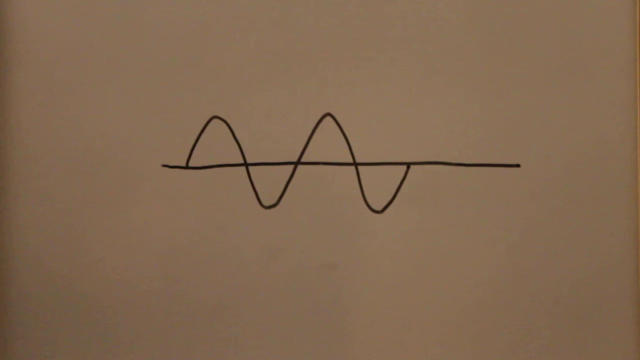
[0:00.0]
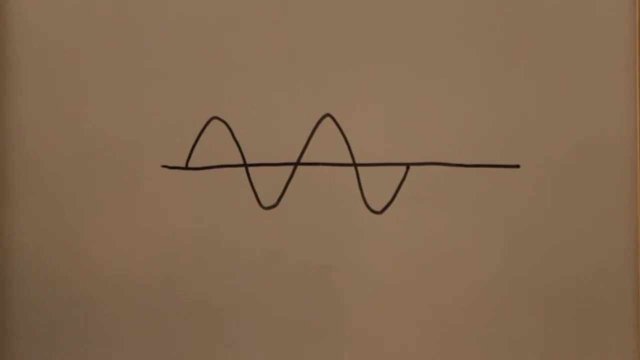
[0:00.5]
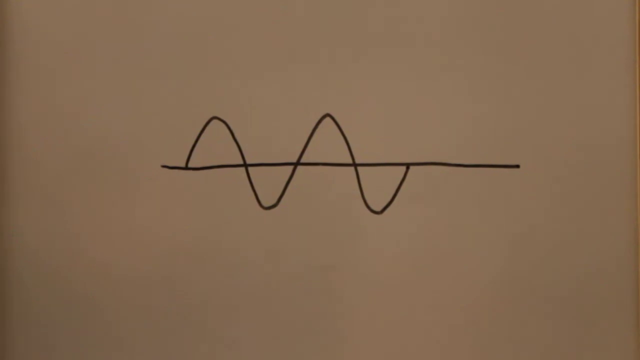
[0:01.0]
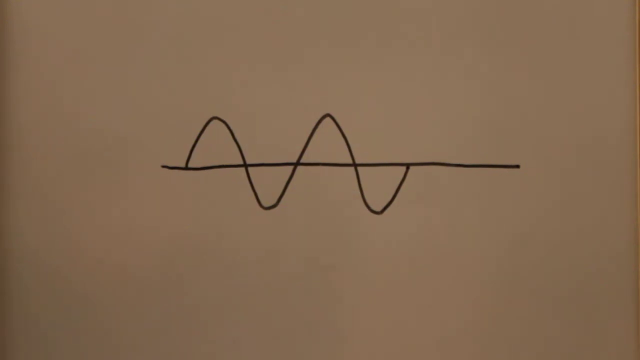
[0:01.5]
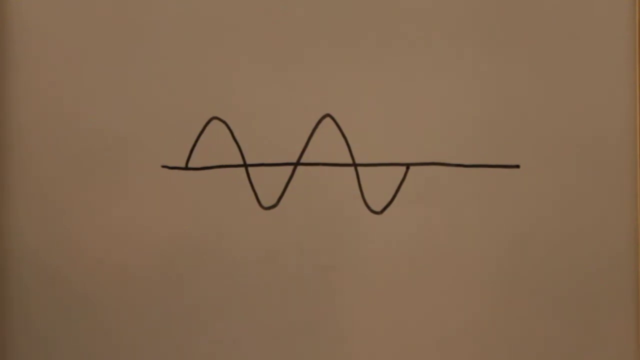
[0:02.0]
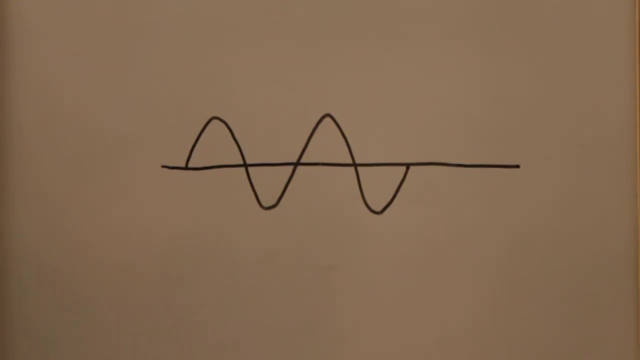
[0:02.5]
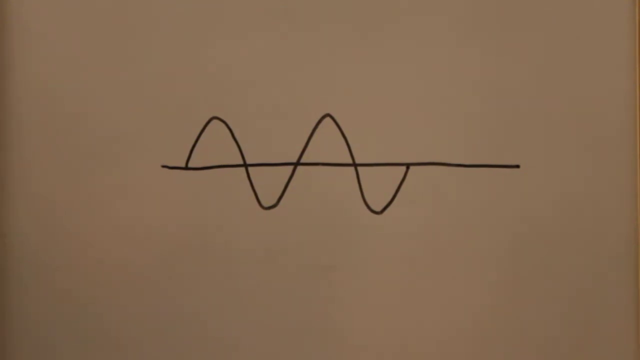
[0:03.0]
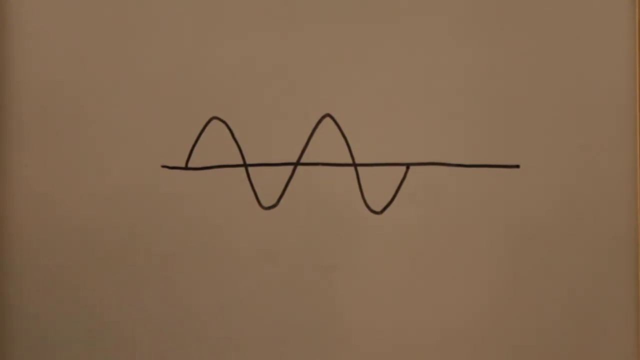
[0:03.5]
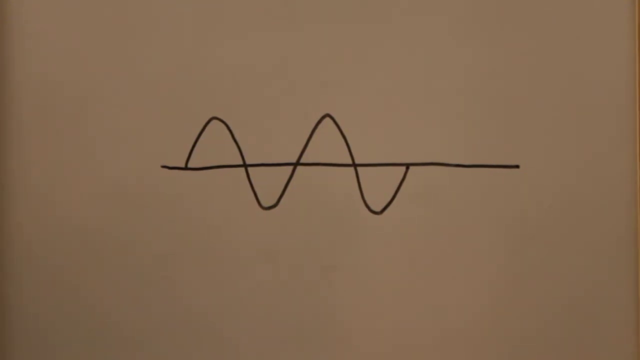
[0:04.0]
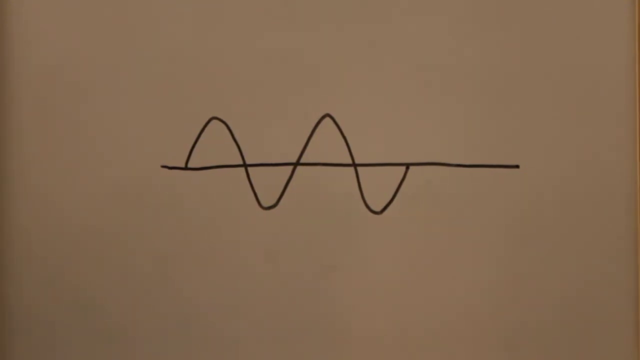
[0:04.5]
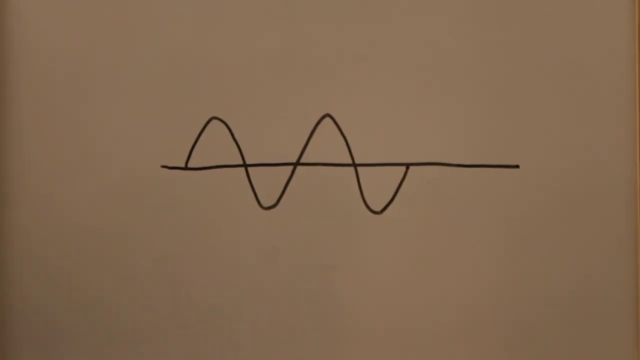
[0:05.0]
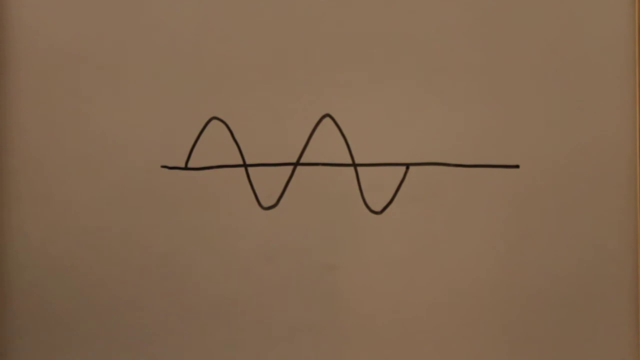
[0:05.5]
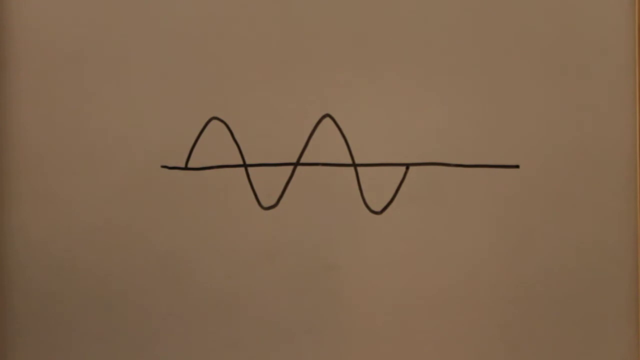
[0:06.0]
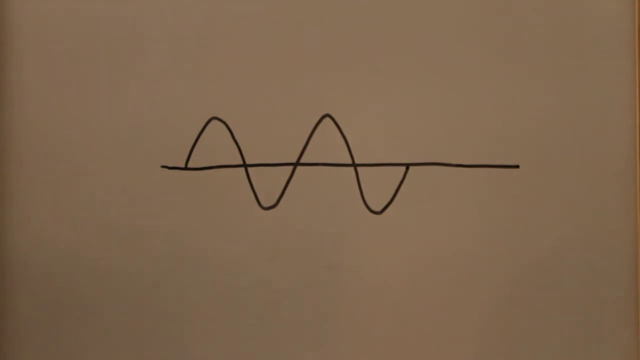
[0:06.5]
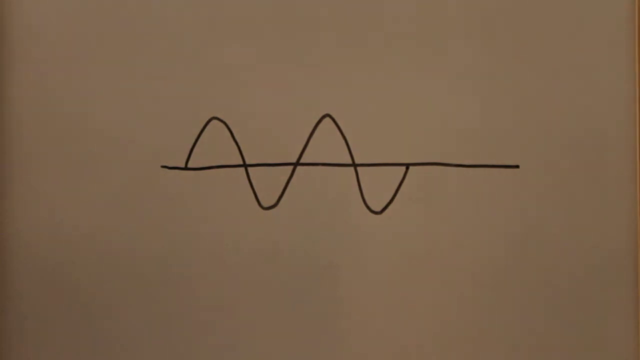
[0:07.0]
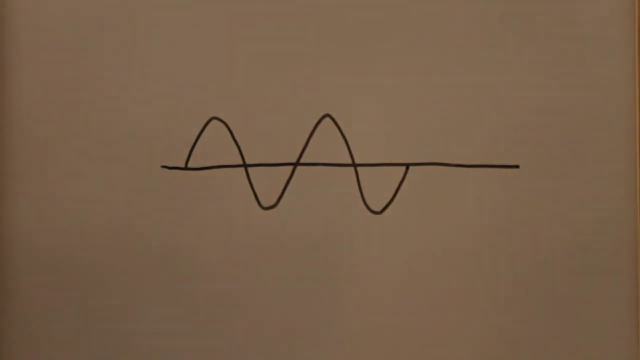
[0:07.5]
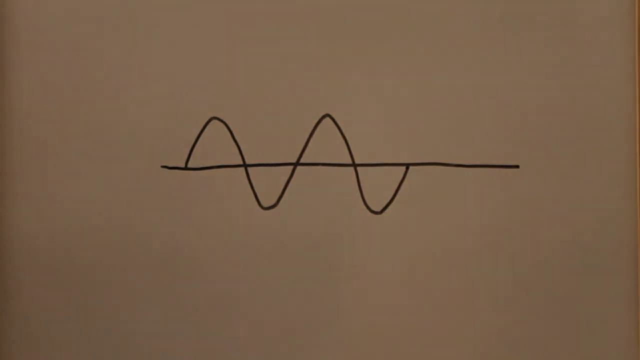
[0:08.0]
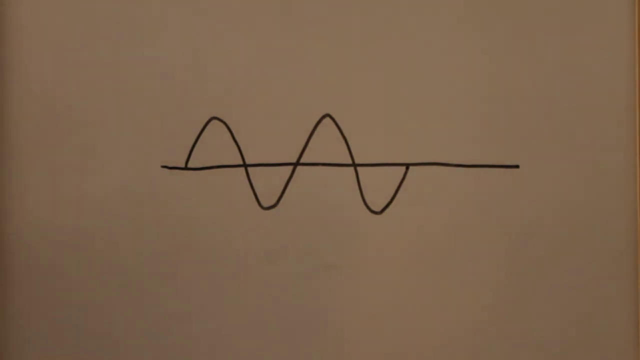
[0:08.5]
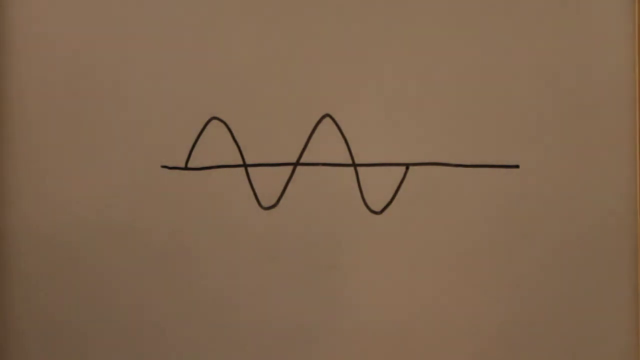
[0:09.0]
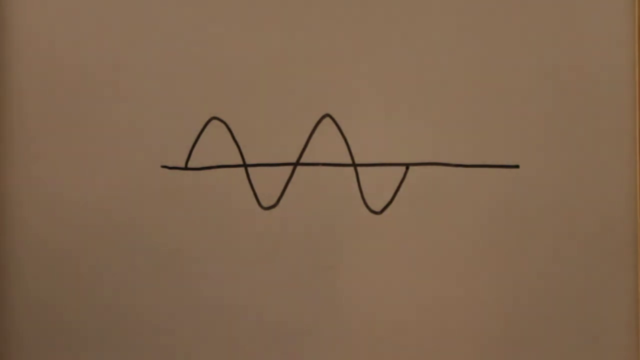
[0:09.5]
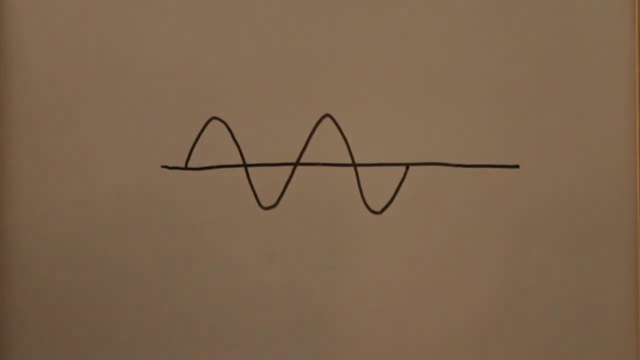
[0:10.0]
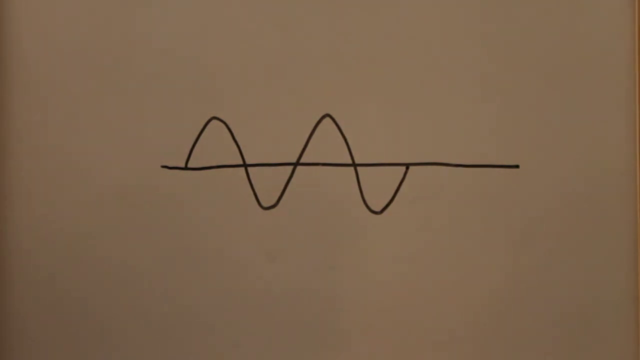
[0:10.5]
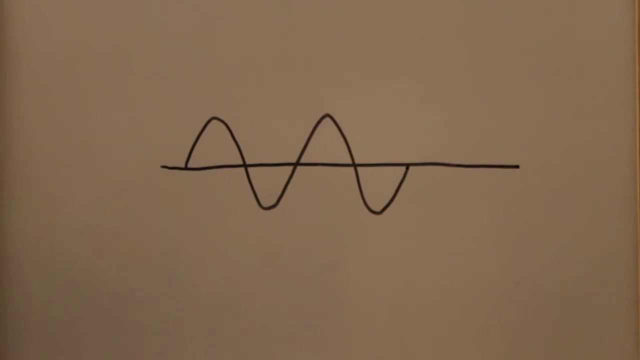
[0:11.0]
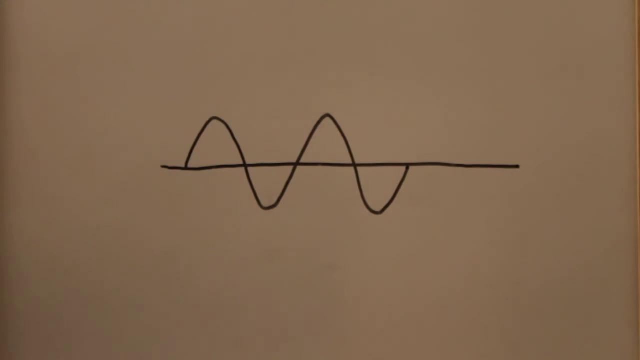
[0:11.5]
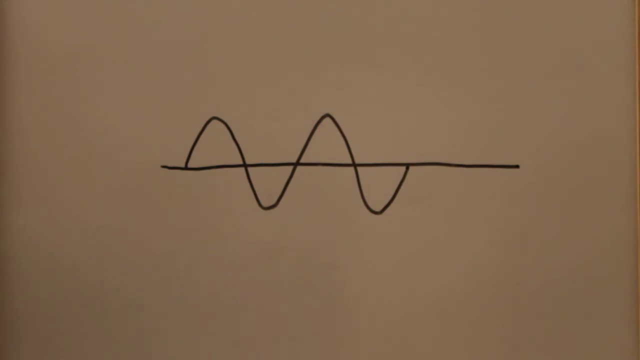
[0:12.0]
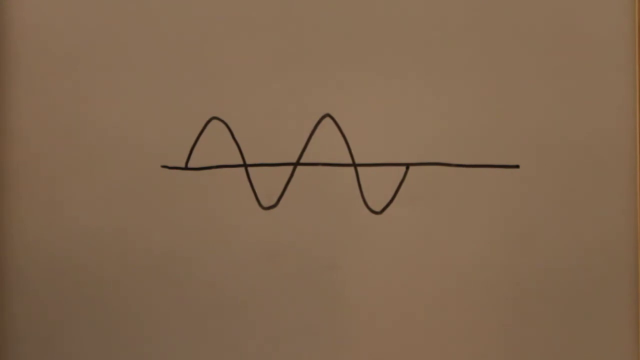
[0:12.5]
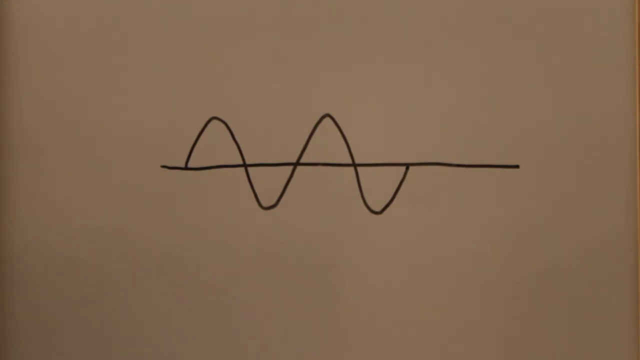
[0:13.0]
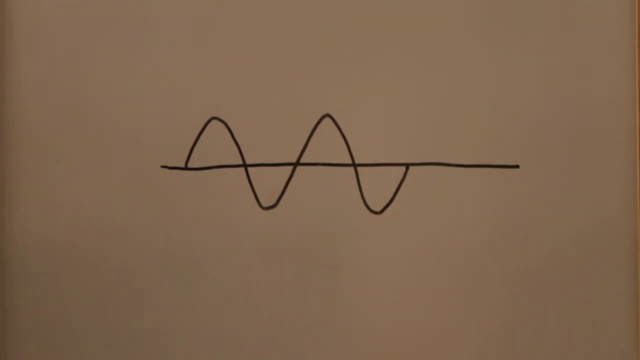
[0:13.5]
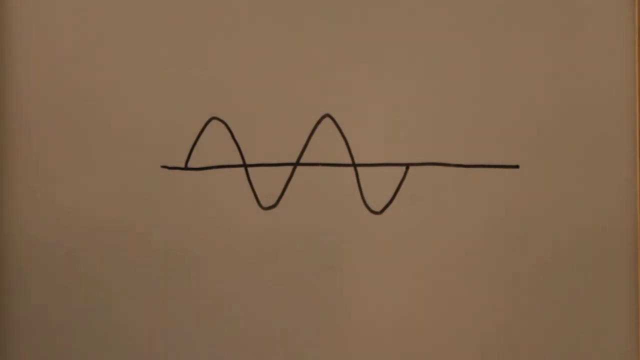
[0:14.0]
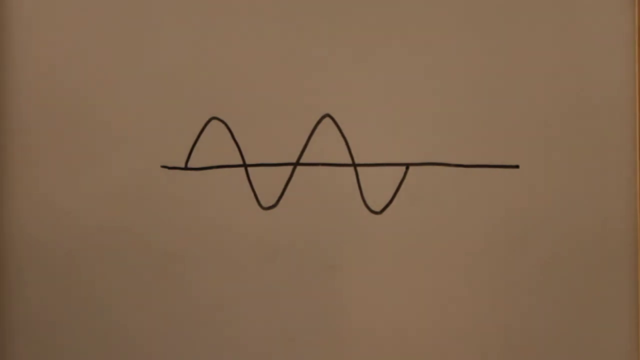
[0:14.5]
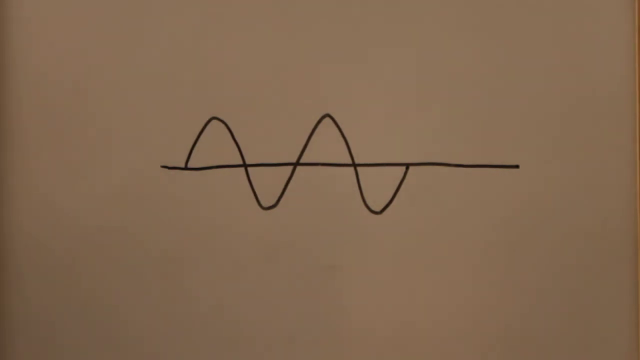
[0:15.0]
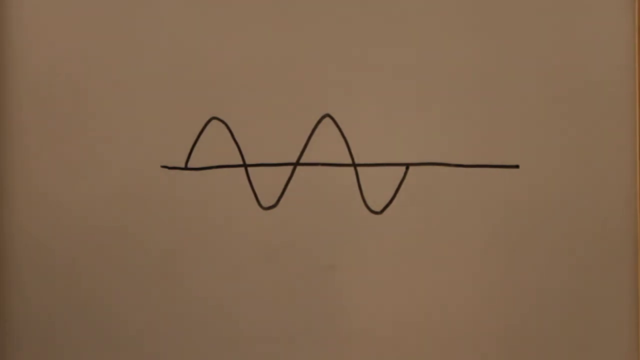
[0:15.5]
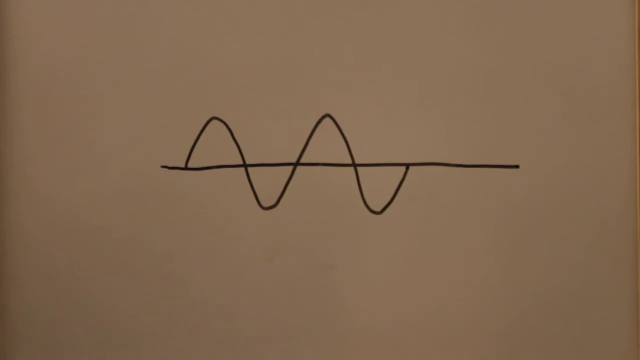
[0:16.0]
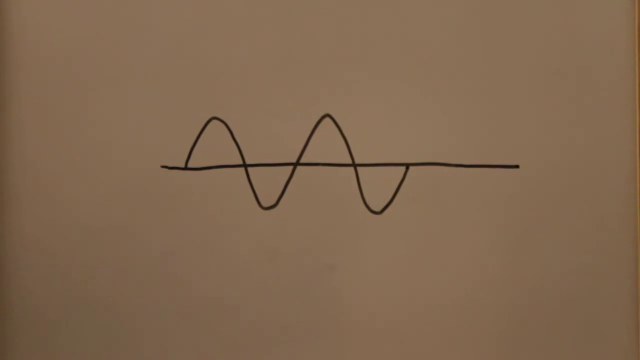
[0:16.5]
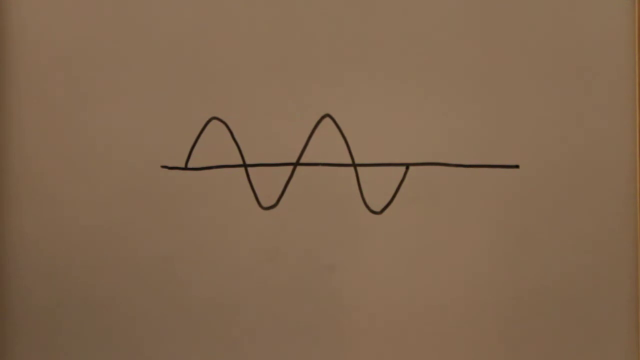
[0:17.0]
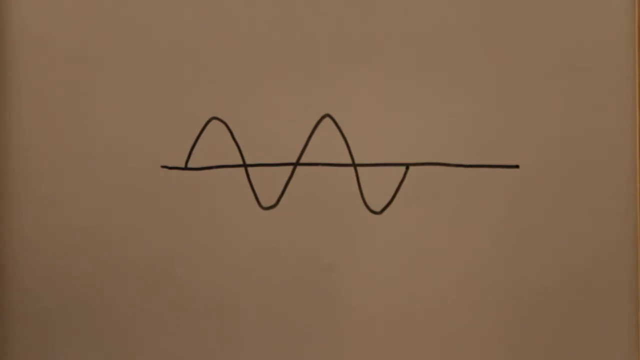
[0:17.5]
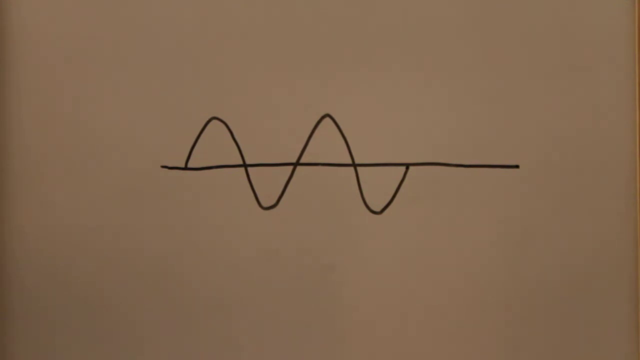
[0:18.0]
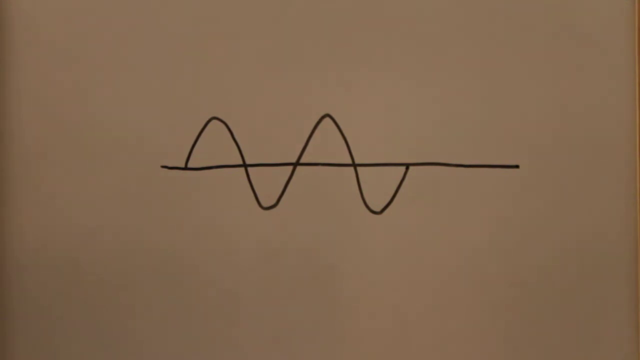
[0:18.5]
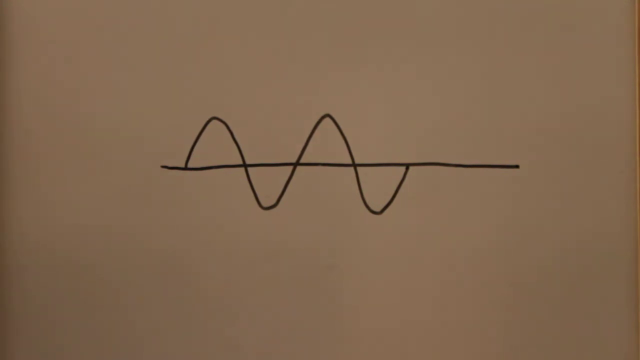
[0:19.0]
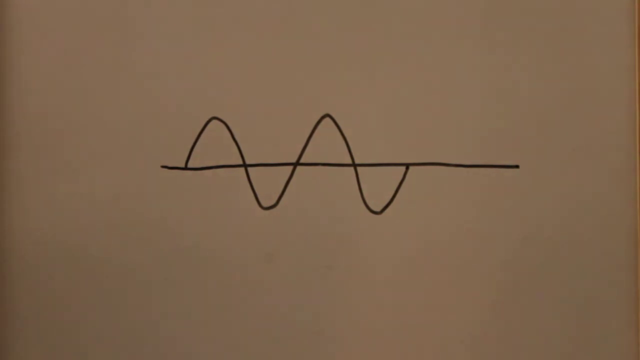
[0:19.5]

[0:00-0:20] On a brown background there is a hand-drawn horizontal black line that does not reach the edges of the frame. A squiggly black line starts on the left side, goes up above the line, down below it, up above it, down below it again, and then meets the horizontal line before that line ends. On the right side the horizontal line extends a little further past the squiggles. The lines are already drawn and nothing else moves through this section. The brown is a light chocolate brown. The drawing is clearly done by hand: the black line is not perfectly straight and the ups and downs are not symmetrical. It looks like some kind of graph or something mathematical is being created.